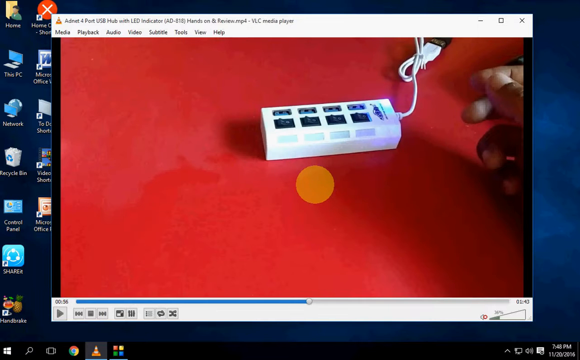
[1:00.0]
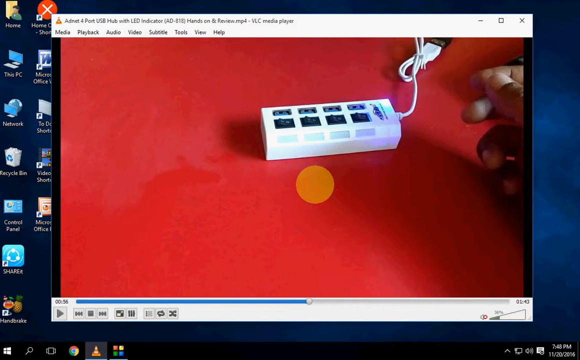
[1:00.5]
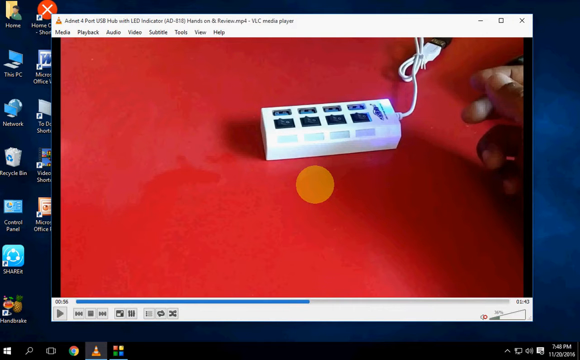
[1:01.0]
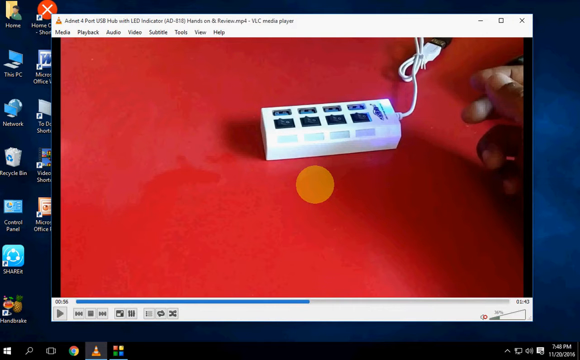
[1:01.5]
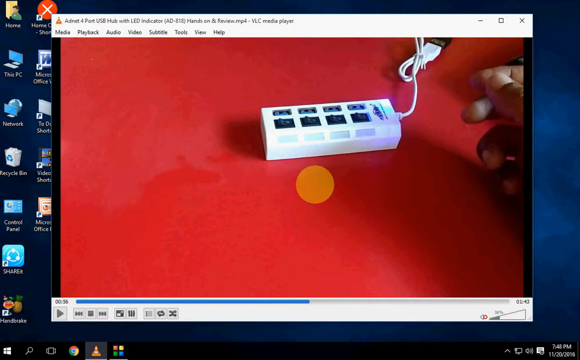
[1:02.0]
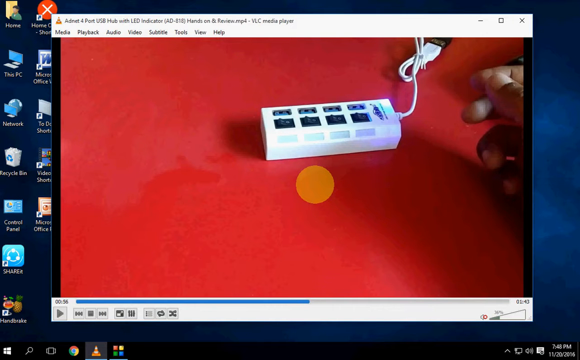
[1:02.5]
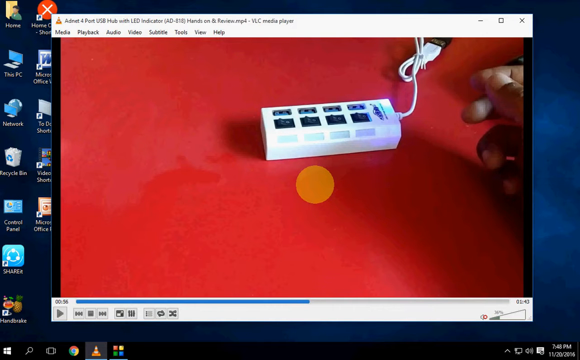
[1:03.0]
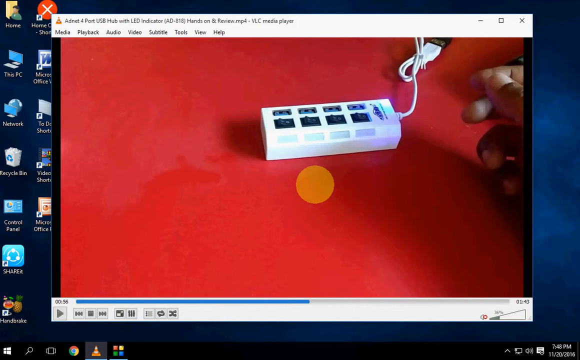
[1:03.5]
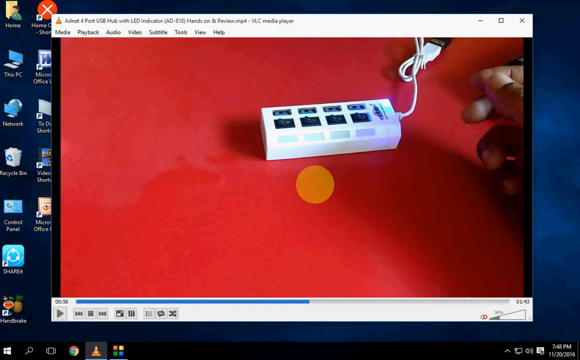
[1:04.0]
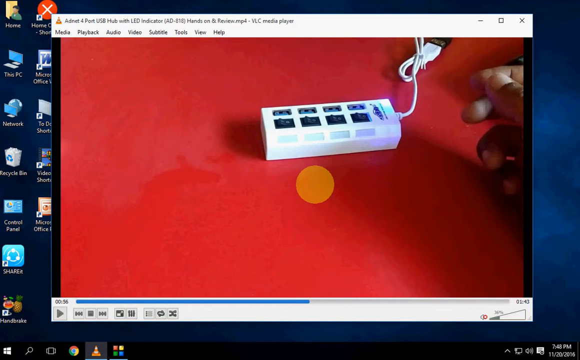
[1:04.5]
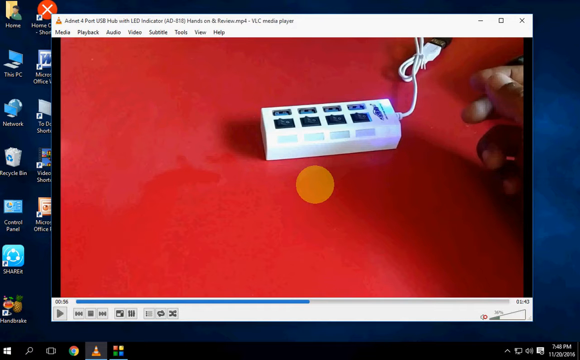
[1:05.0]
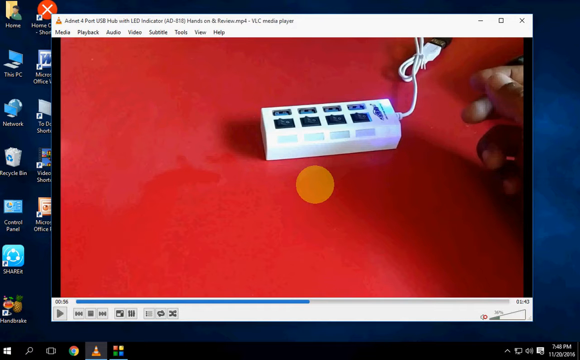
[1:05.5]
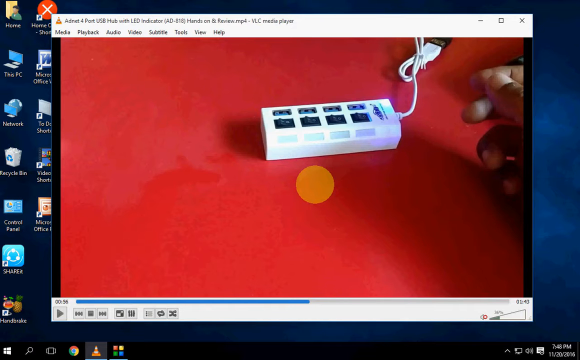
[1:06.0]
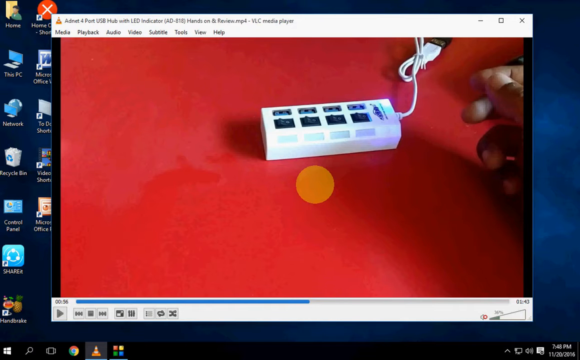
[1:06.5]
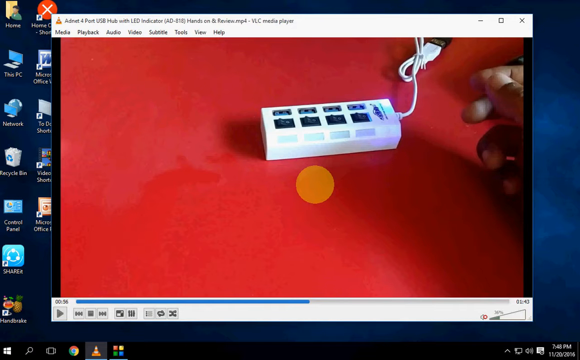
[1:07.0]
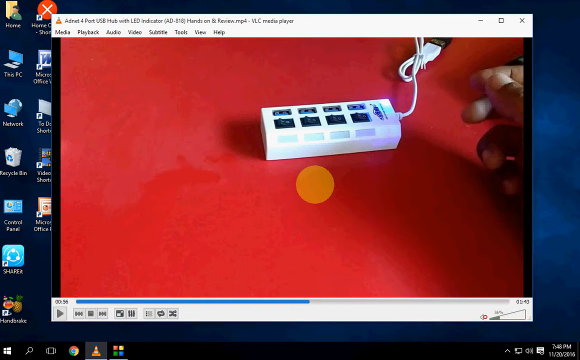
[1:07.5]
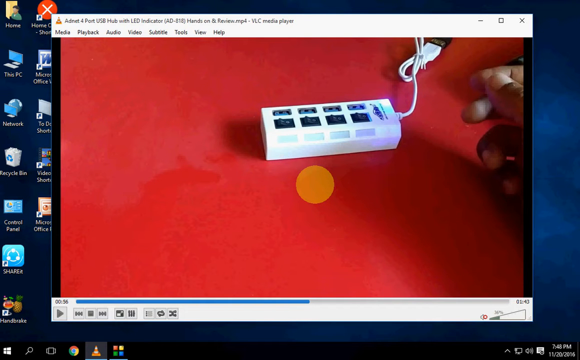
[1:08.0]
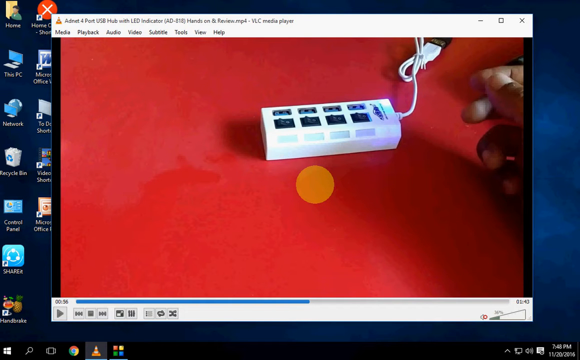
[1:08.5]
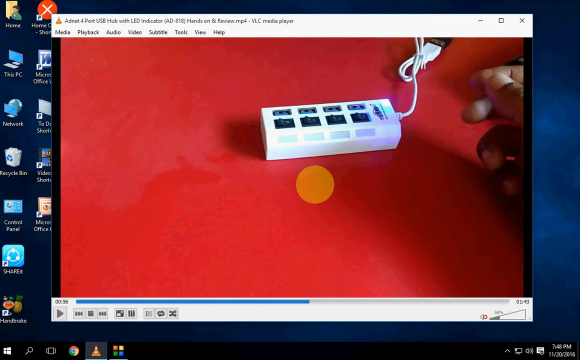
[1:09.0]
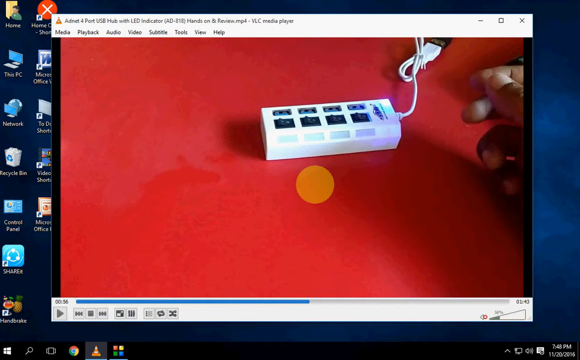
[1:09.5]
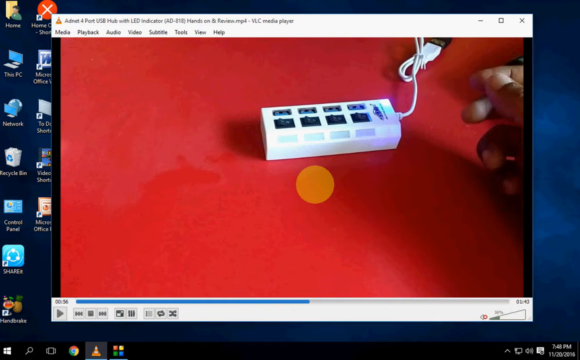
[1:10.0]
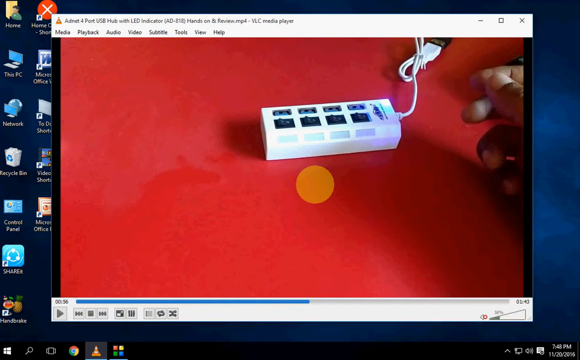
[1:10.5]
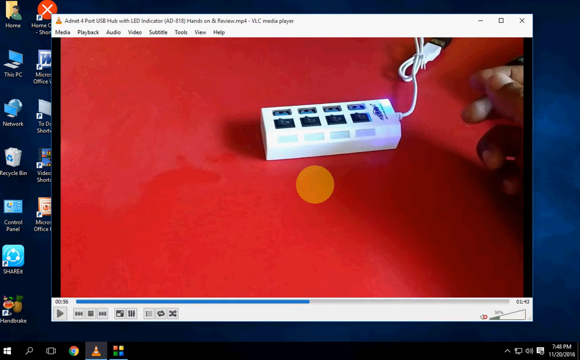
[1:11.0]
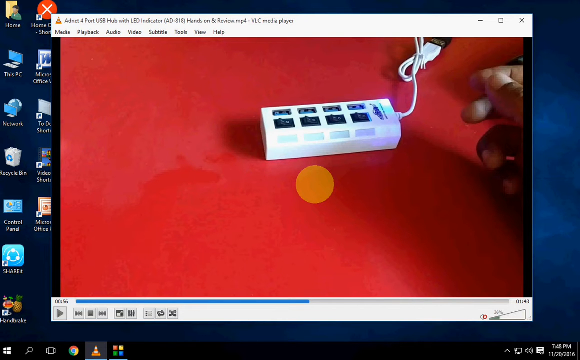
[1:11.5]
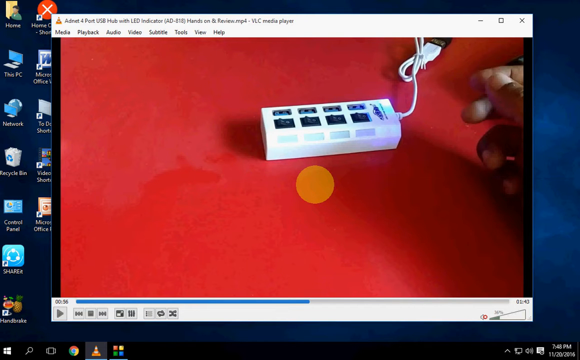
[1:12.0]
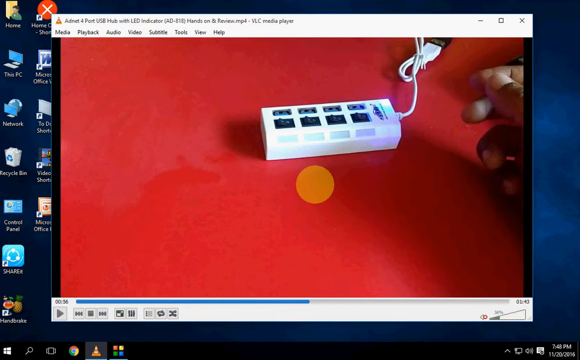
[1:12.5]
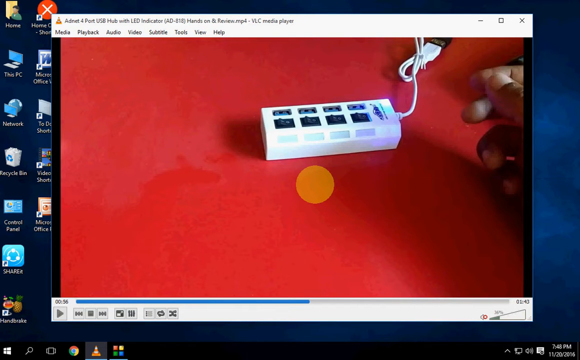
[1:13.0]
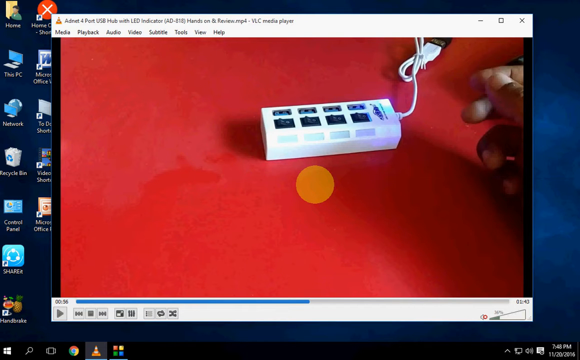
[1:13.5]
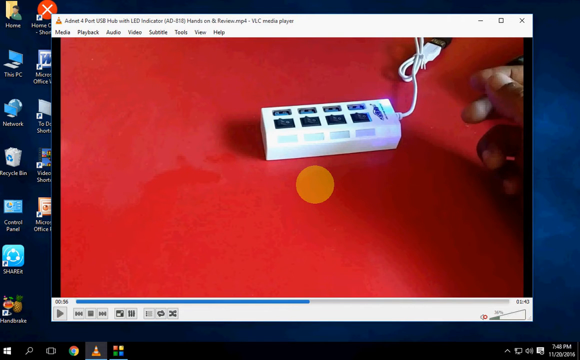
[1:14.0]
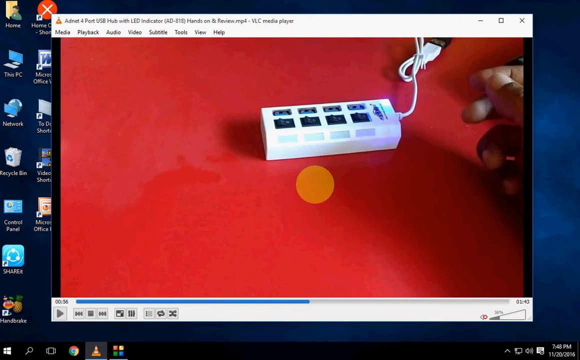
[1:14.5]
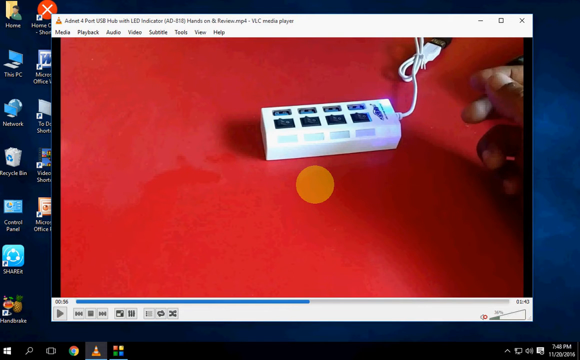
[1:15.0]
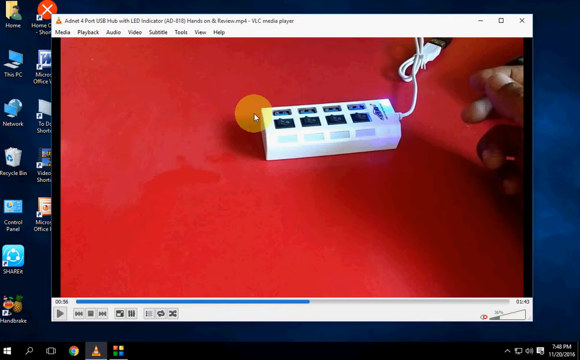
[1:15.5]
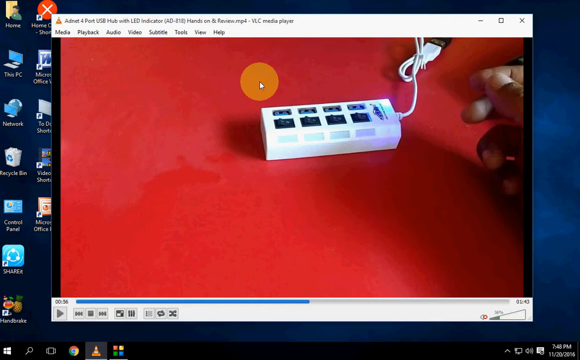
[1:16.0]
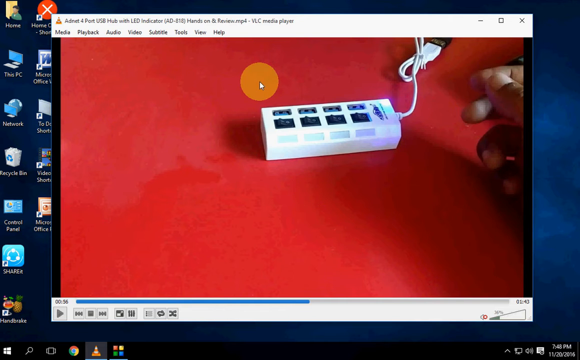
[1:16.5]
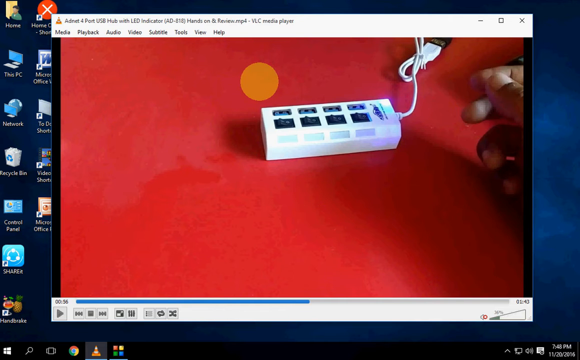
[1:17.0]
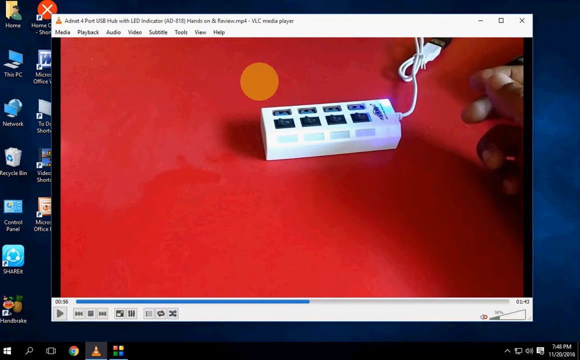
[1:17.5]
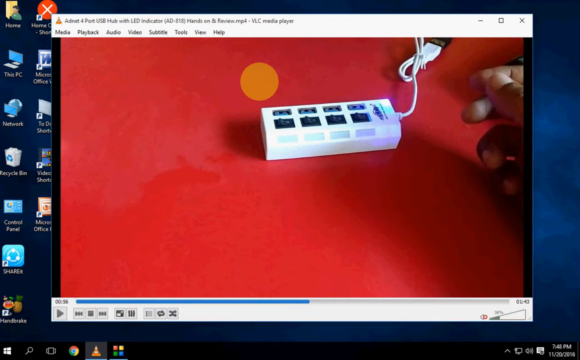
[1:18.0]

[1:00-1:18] The VLC media player is shown and nothing changes at first. The mouse is still, and an orange circle is in the center of the screen. The mouse then slowly moves to the top of the video. Icons are to the left of the video. The top left is red, the top right is yellow, the bottom right is blue, and the bottom left is green. The current time is 7:40 PM and the date is 11-20-2006. The video in the VLC window has not played at all; its title is "Adnet 4-Port USB Hub with LED Indicator Hands-On and Review.mp4". It appears to show a white USB hub in the center on a red surface, with hands to the right. The video is muted, and at the bottom right its position reads 56 seconds out of 1 minute and 43 seconds.